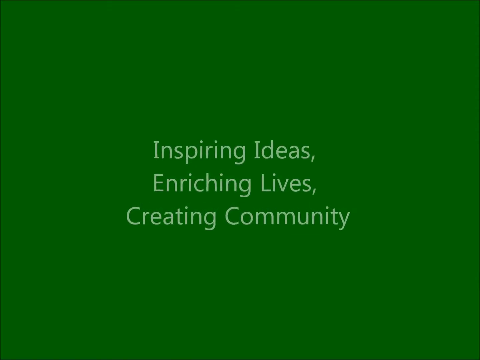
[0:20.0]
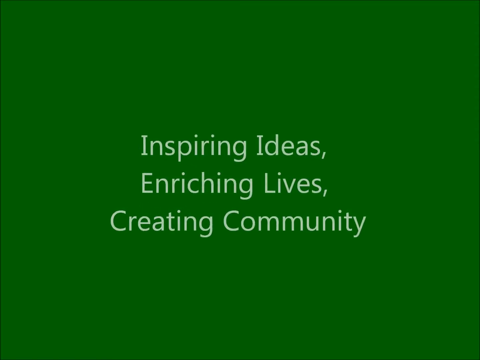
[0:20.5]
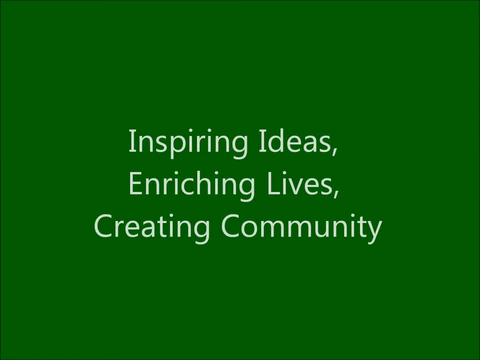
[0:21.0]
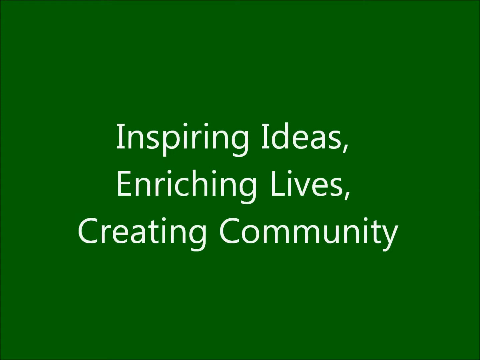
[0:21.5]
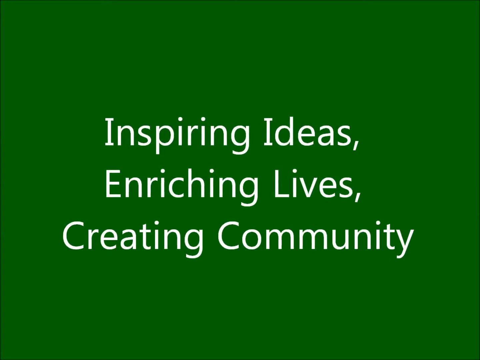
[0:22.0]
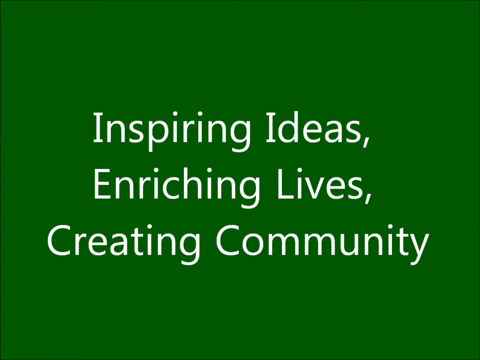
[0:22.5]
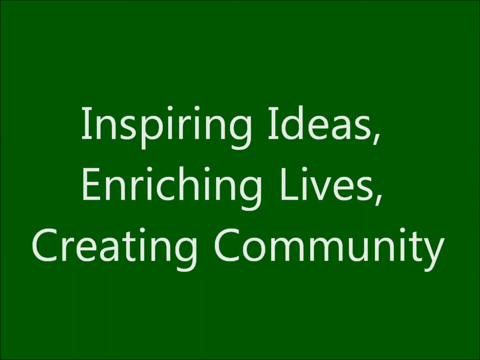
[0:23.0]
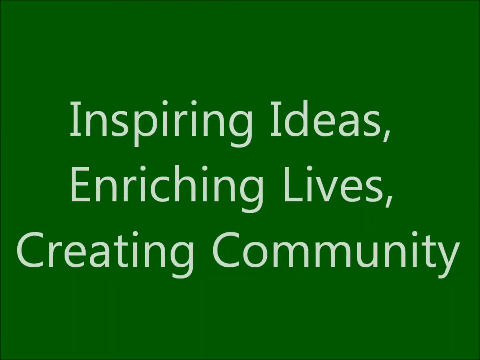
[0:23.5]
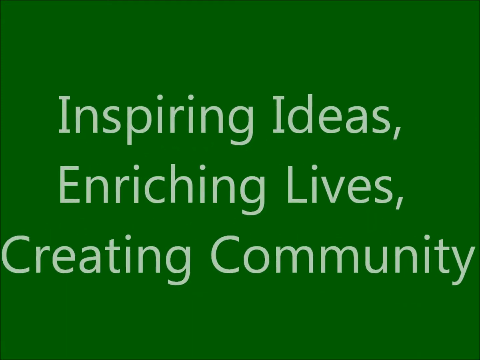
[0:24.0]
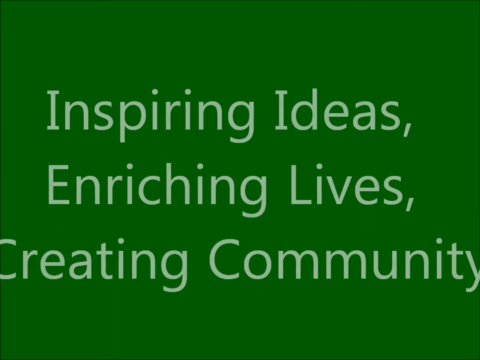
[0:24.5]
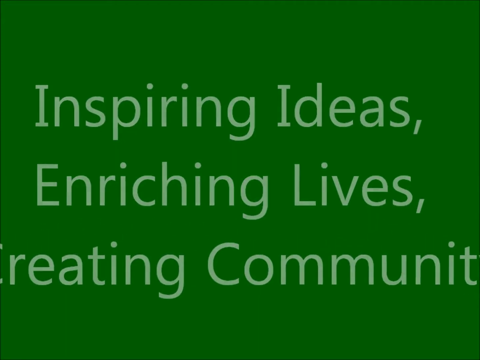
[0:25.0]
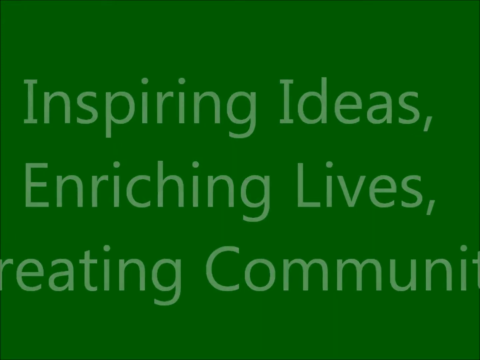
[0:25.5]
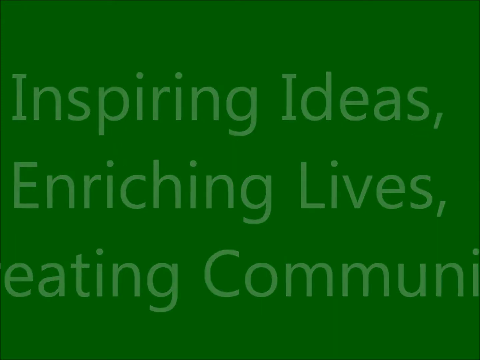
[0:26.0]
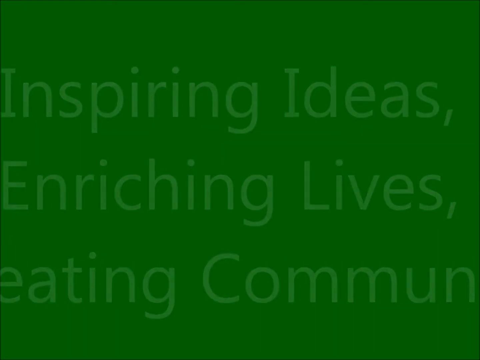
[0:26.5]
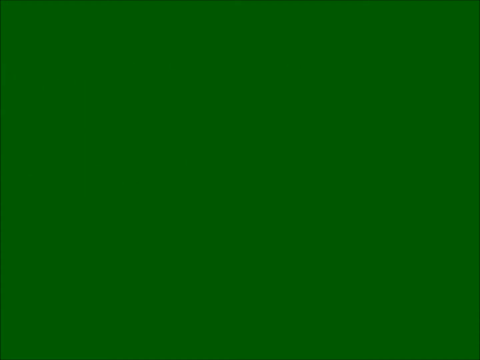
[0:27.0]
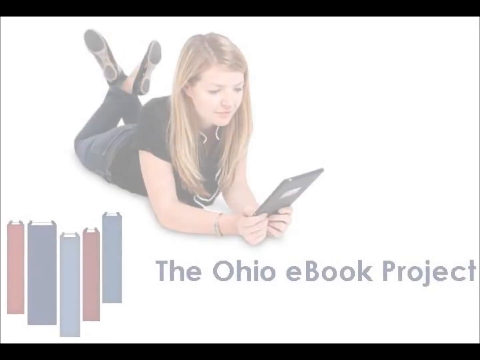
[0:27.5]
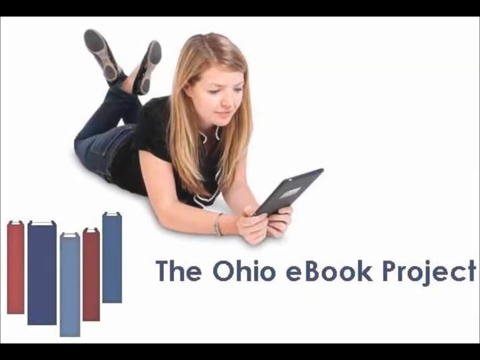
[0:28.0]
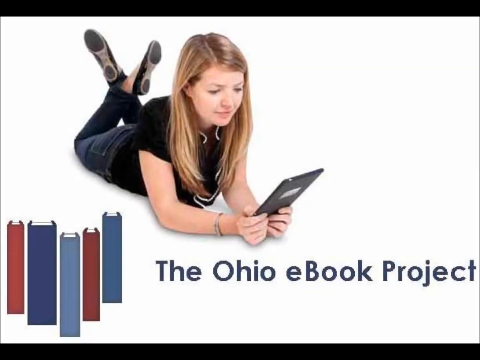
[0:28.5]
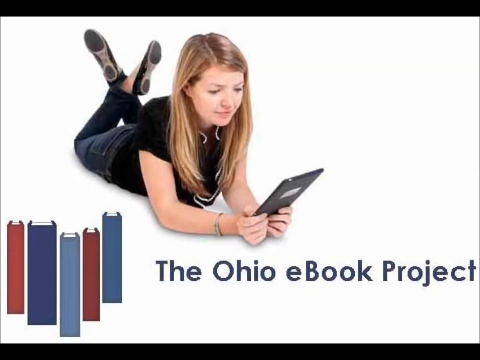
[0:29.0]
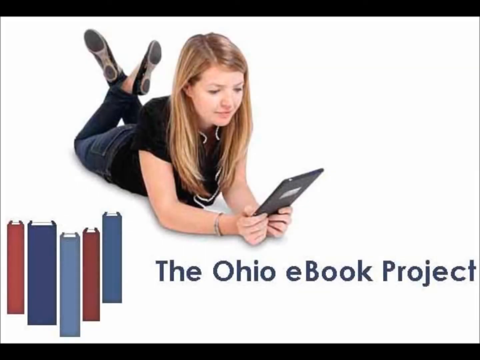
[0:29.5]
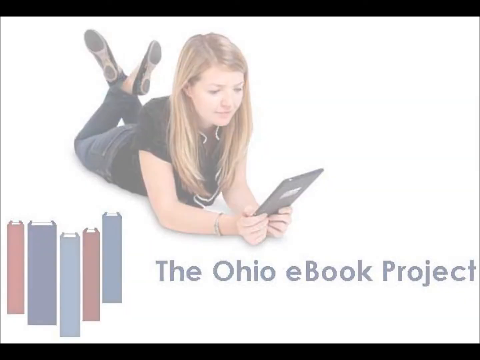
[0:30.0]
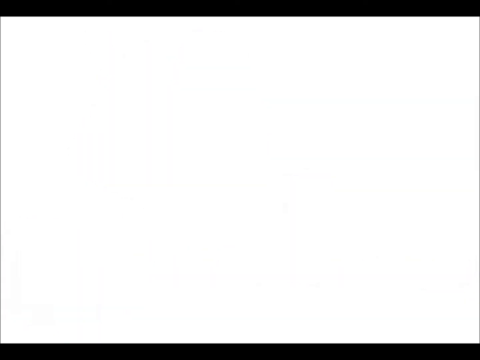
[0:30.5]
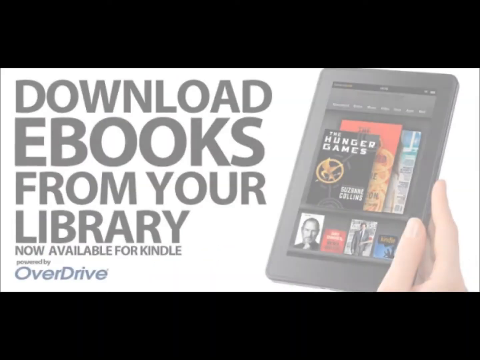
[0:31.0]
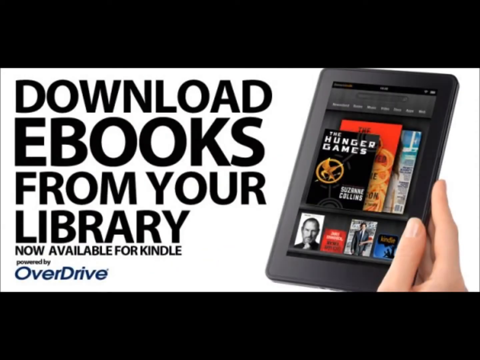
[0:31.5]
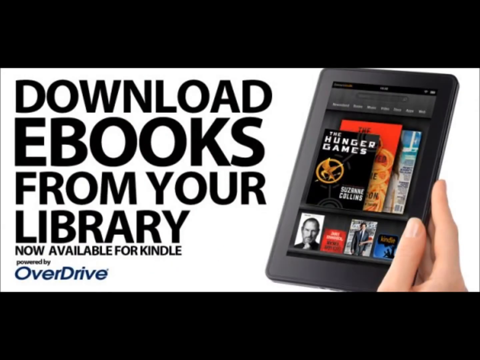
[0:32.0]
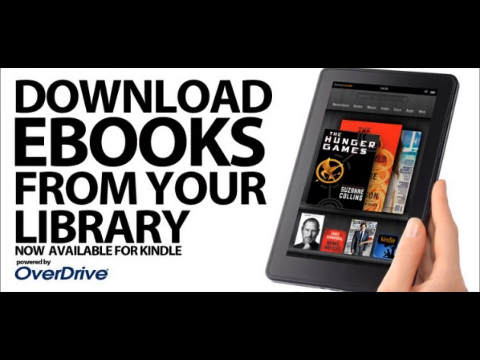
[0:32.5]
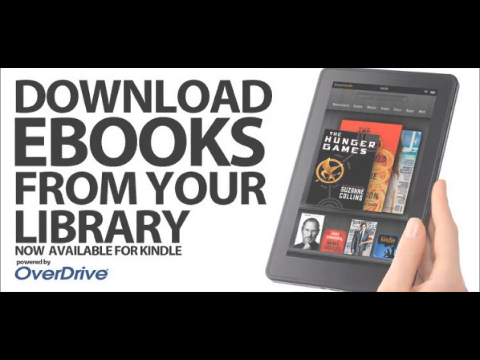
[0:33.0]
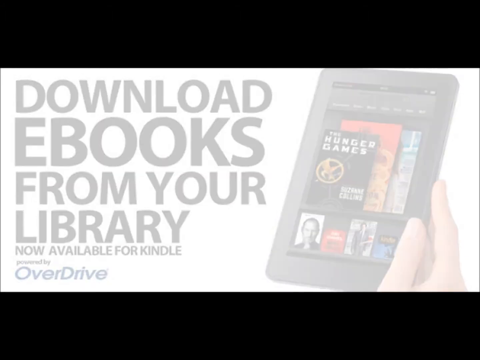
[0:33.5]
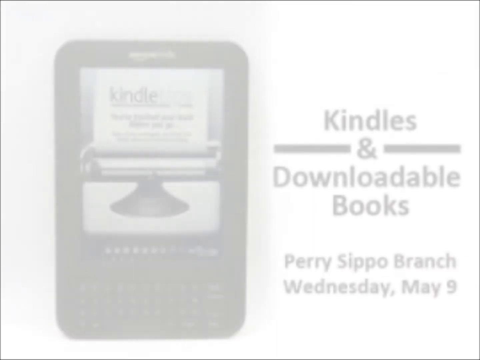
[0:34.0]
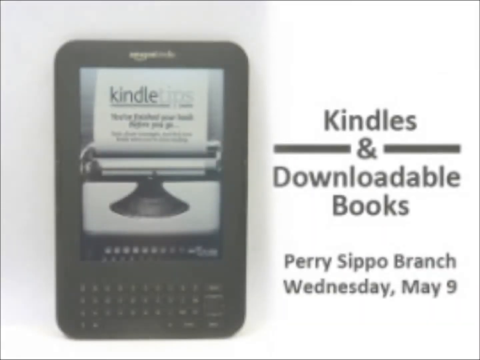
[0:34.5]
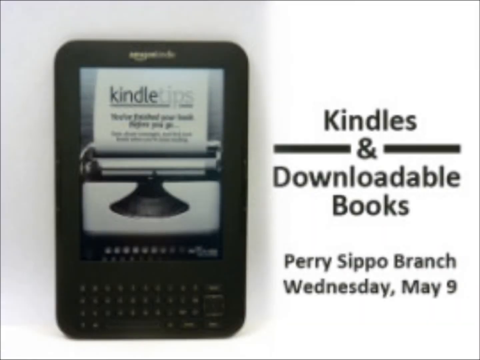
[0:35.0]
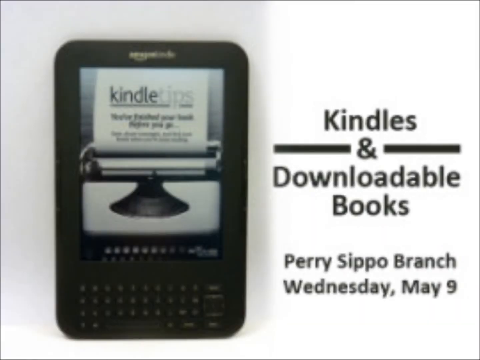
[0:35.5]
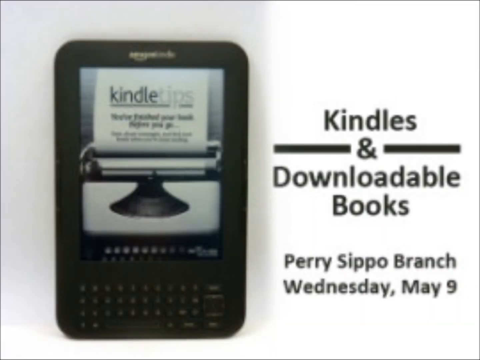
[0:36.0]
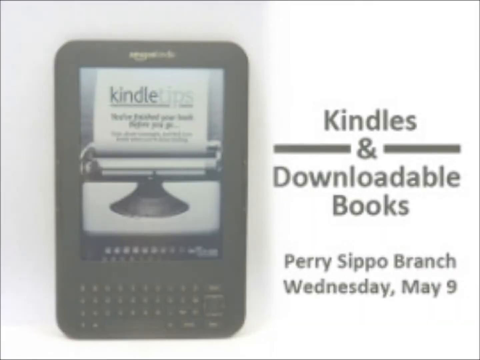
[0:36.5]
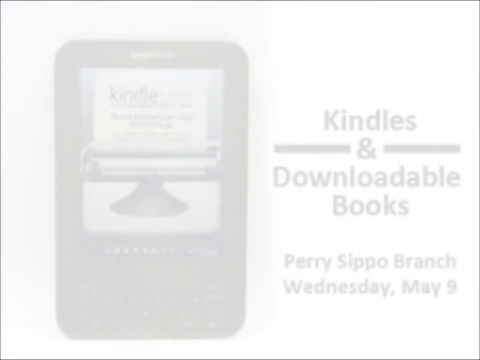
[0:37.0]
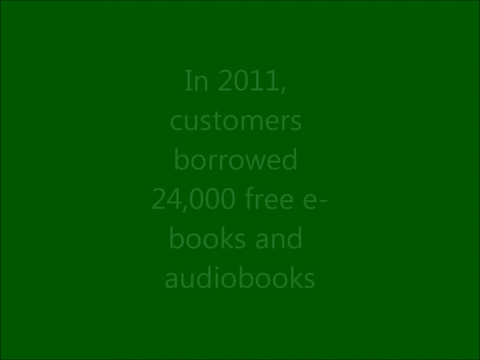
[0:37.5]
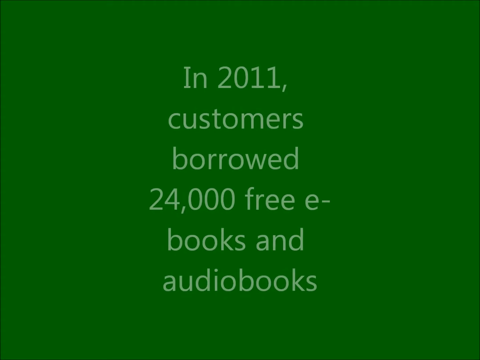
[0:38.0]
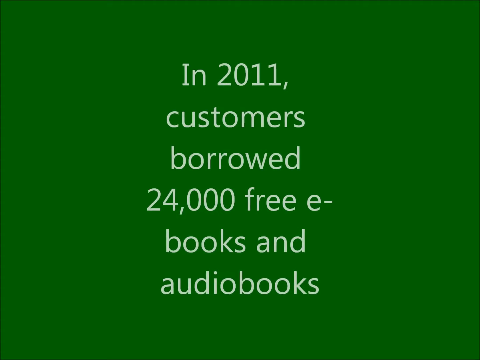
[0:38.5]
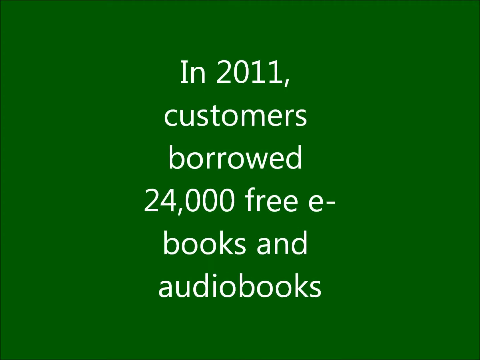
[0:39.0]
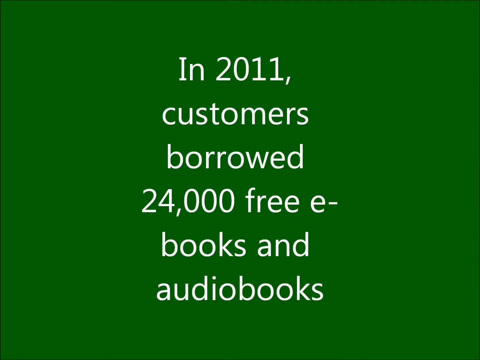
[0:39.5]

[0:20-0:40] An advertisement for the Stagg County district library focuses mostly on the books offered in the library. It is a community library, and its motto or slogan says "inspiring ideas and enriching lives, creating community", followed by the library's name and the words More than books. Sponsors or partners of the library appear next, including the Katzen Symphony Orchestra, the Massey Medical Center, the Akron Kenton Airport, the Kenton Museum, the Rotary International, the Sisters of Christianity Foundation, and the Lake Blue. A book by Chris Spillion titled That's Why I Am Here is shown, detailing the story of Chris and Stephanie Spillion. The library also offers digital e-books for kids to read, and it has lent over thousands of free books to the community.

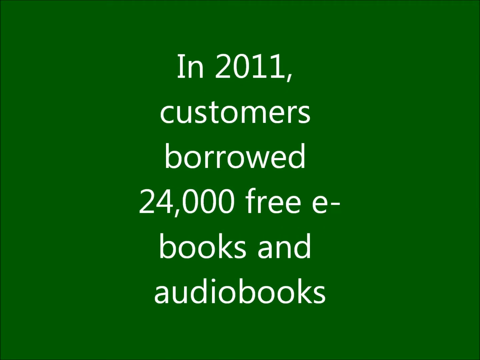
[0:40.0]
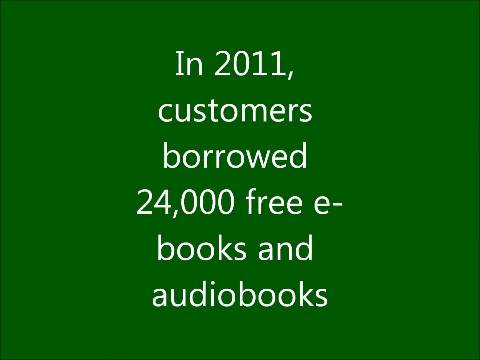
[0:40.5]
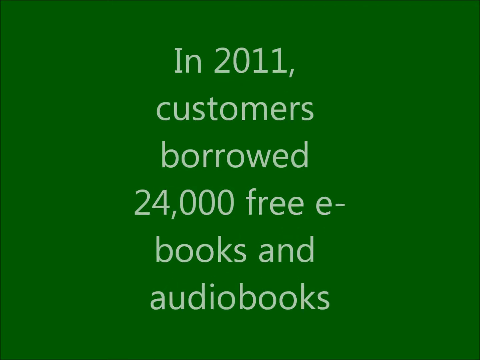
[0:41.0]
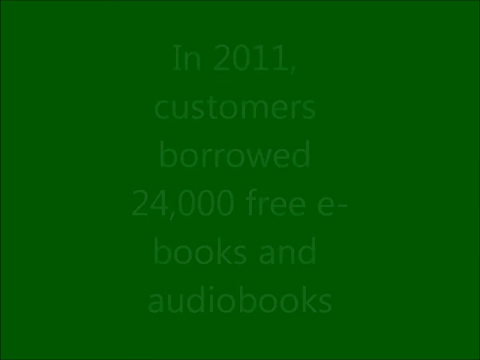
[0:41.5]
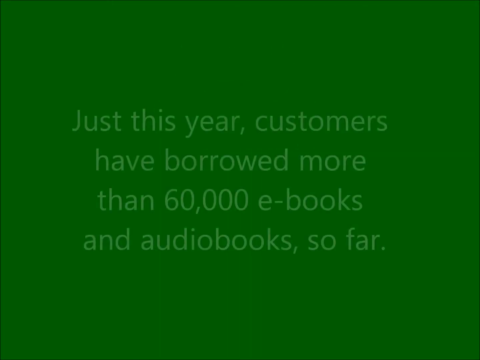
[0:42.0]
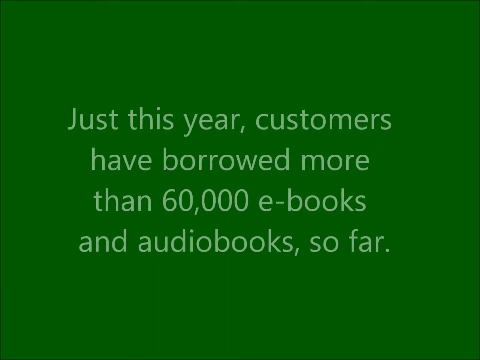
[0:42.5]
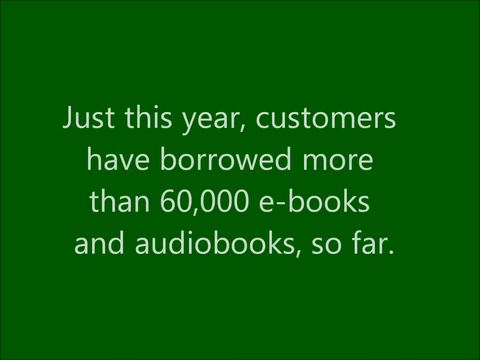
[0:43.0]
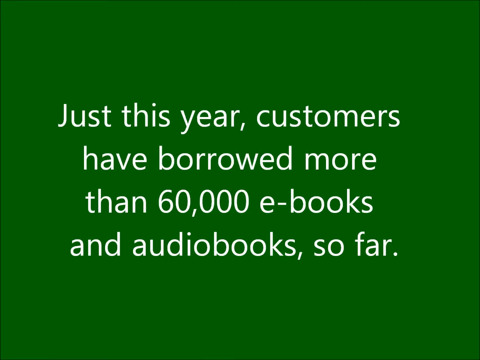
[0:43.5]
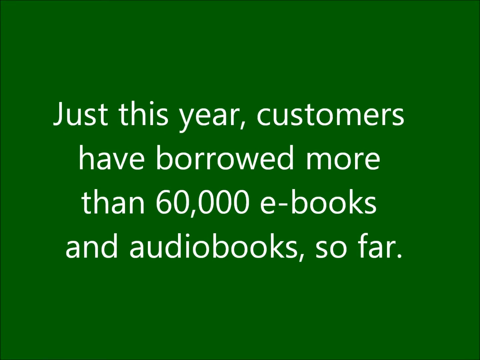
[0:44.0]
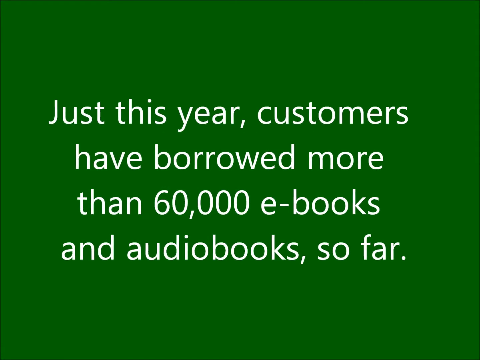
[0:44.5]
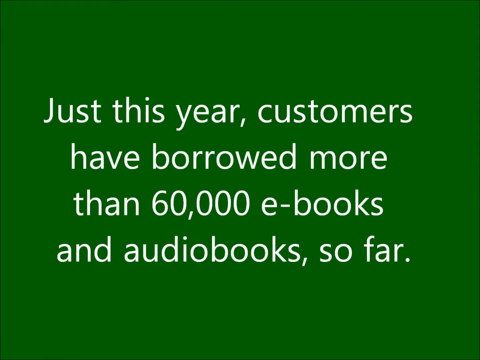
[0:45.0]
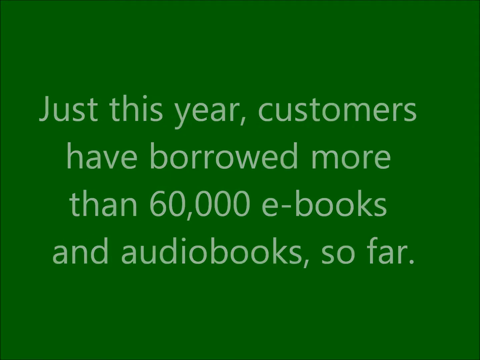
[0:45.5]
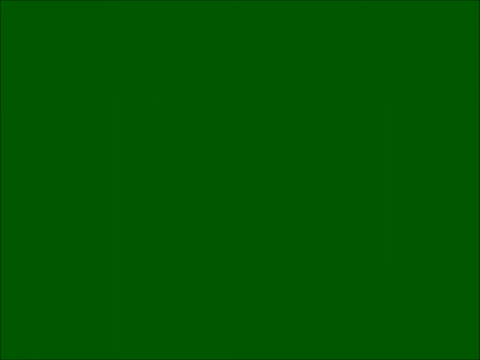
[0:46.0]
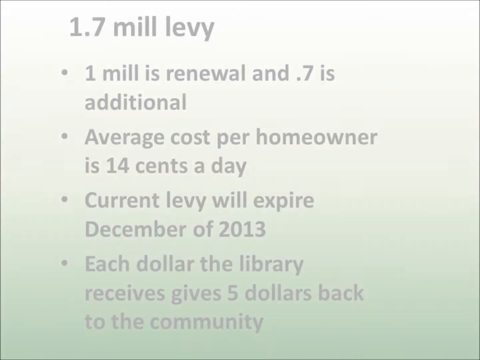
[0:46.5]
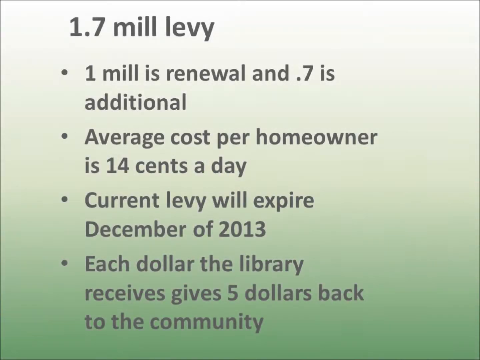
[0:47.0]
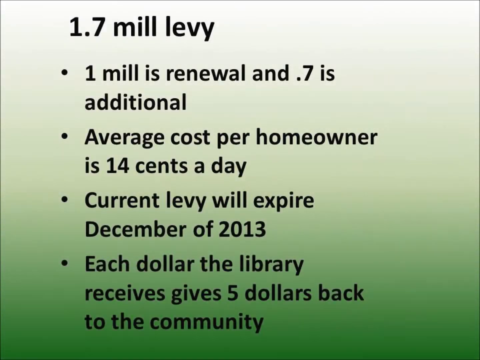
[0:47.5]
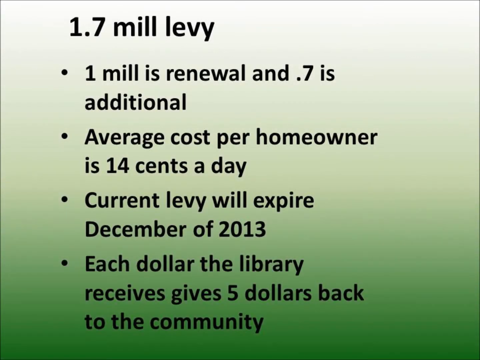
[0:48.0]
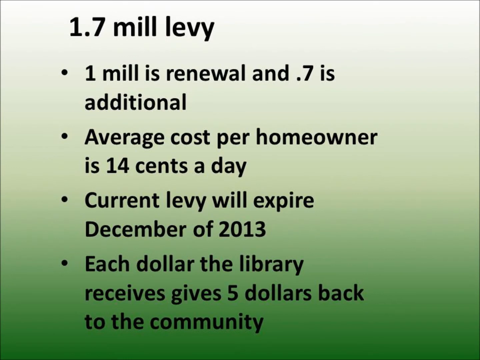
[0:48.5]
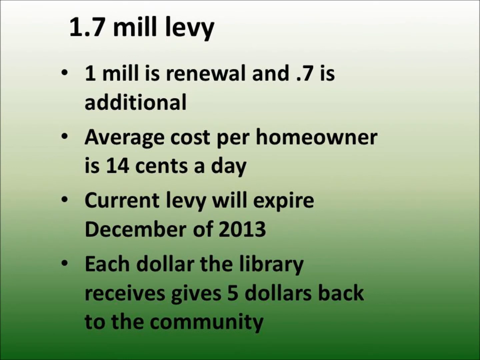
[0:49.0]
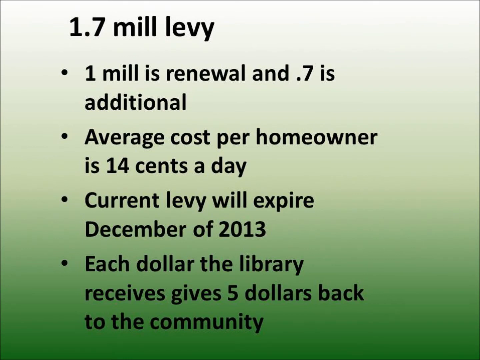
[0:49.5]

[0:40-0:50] The advertisement banner for Stoke County District's Library focuses on the books offered by the library. Its slogan says "Inspiring ideas, enriching lives, and creating community", followed by the Stoke County Library name. Besides hard copy books, the library also has a range of e-books, especially for kids. The banner details that in 2011 customers borrowed over 24,000 e-books and other books, all free of charge. The library's partners include the Kitson Museum and Rosario International.